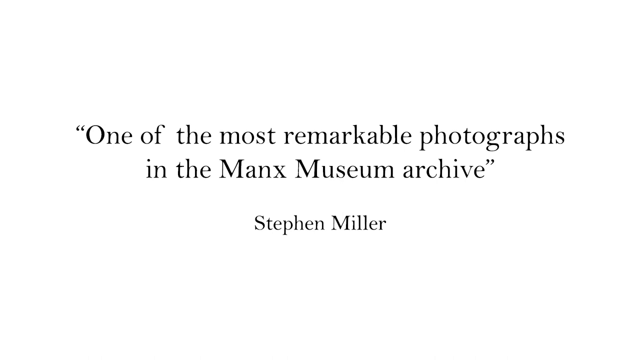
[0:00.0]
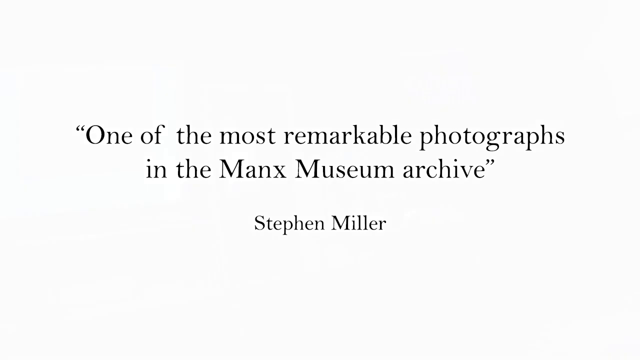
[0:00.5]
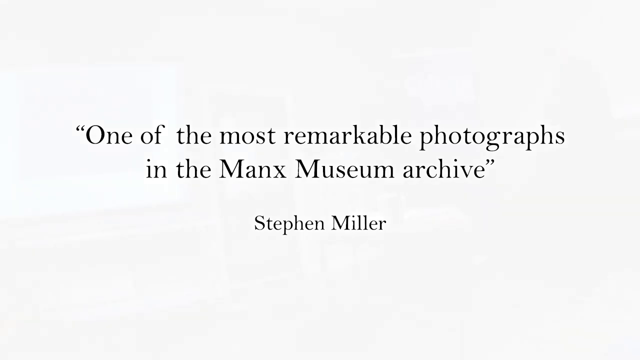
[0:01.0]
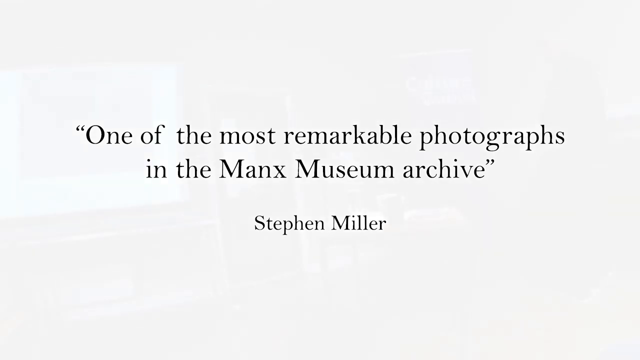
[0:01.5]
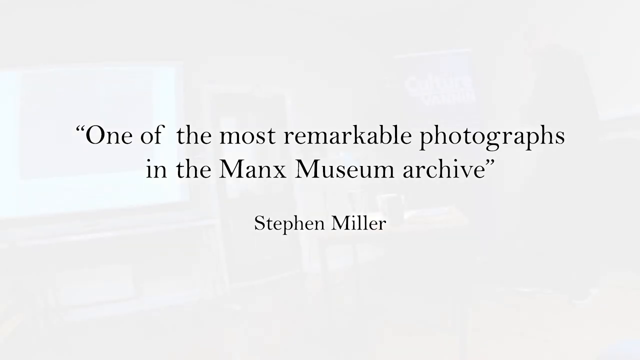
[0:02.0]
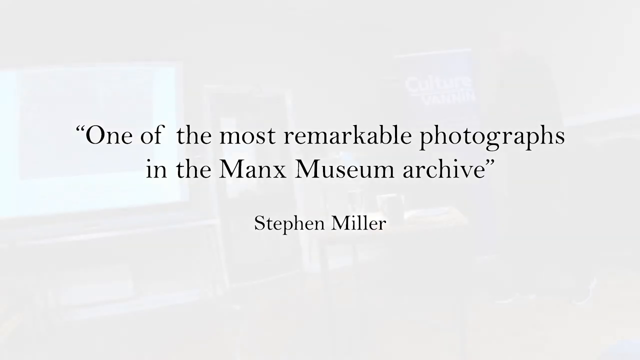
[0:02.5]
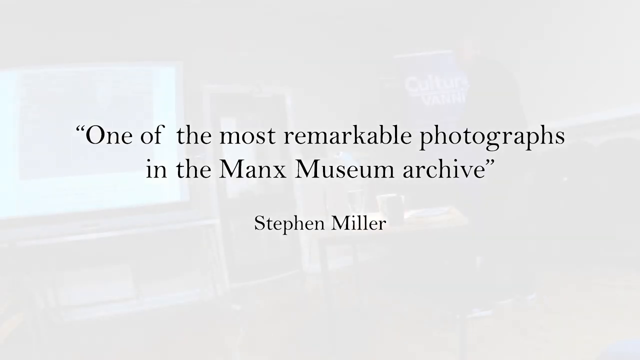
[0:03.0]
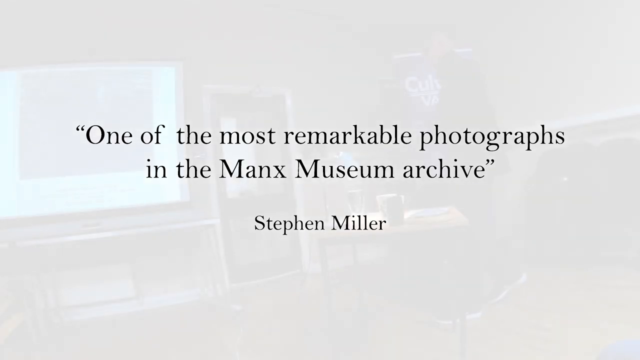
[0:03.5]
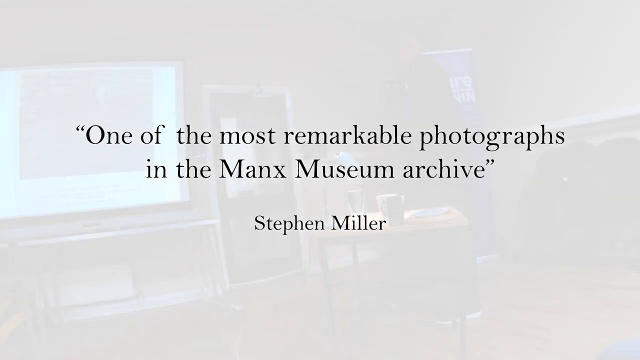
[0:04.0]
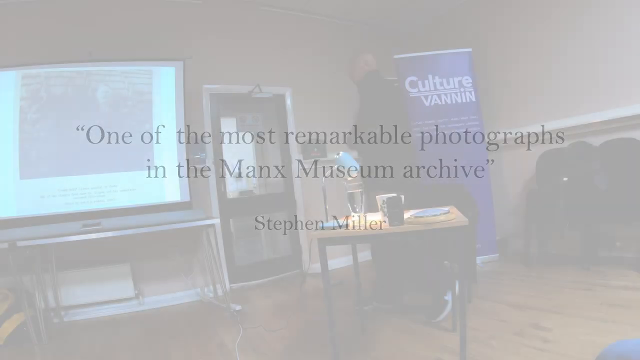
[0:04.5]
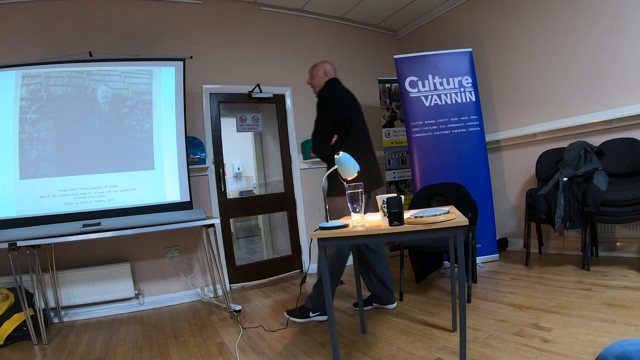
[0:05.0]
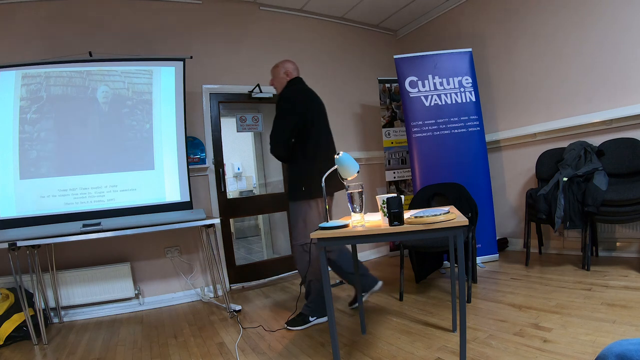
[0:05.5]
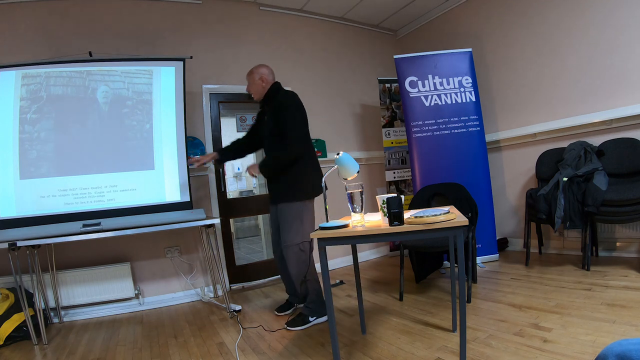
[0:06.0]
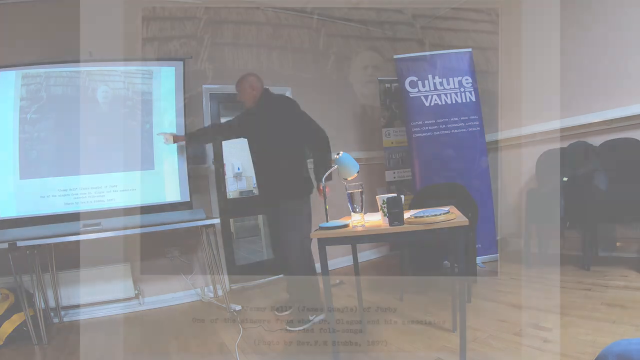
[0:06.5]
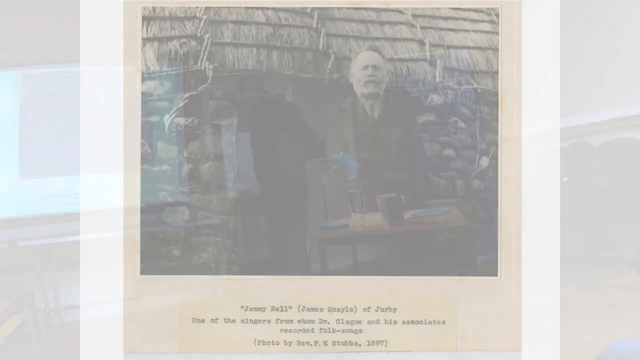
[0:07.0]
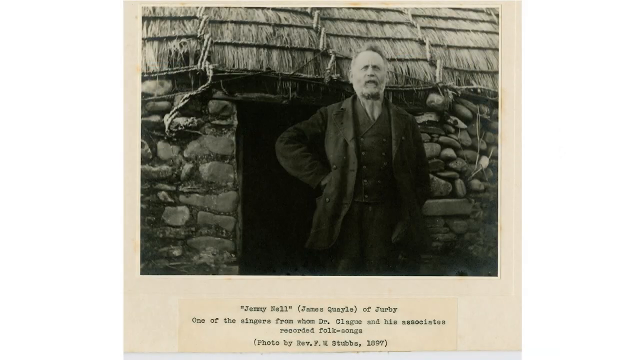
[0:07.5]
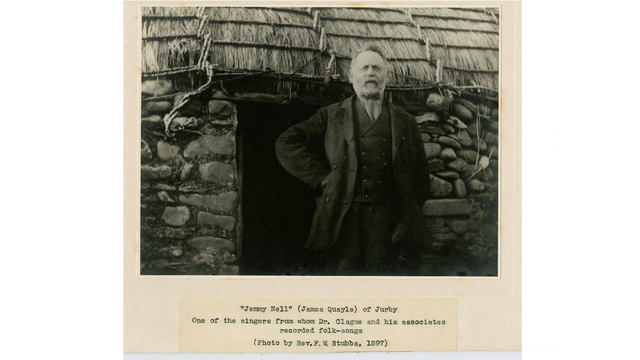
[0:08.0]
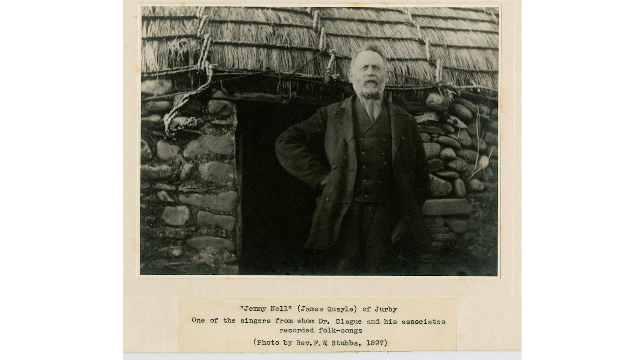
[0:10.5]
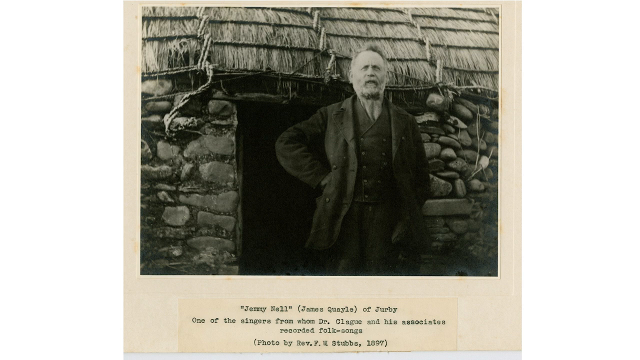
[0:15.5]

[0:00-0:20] The video opens on a white background with black text in the middle, a quote that reads "one of the most remarkable photographs in the Manx Museum Archive." Below it is a name, "Stephen Miller," also in black text. The video then transitions to what looks like a video clip of a man wearing what looks like a black sweater, gray pants and black sneakers. There is a desk in the middle and he is behind it; a lamp and a glass are in the middle of the desk. The man walks to the left, where there is a projector screen, reaches out with his right hand and points at it. The video then transitions to what looks like a black and white picture of a man standing in front of a hut that looks like a stone hut with a straw roof. He is looking at the camera. He has a white beard and appears to be wearing a long coat. His right hand is on his right hip and his left hand is at his side, and he stares toward the camera and a little to the right. At the bottom is black text that reads "Jeremy Bell" followed by something that is hard to read. The video stays on this photograph with the black text at the bottom.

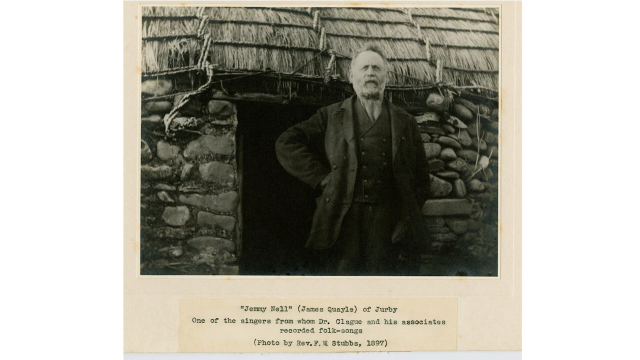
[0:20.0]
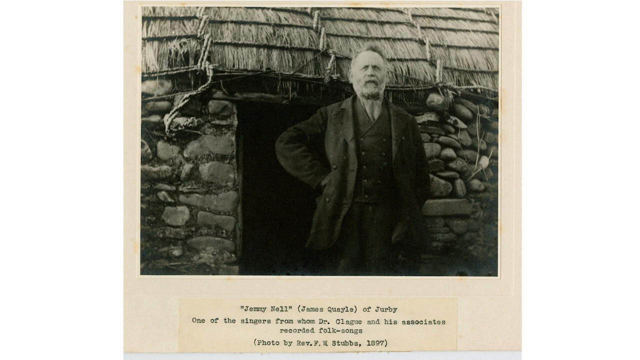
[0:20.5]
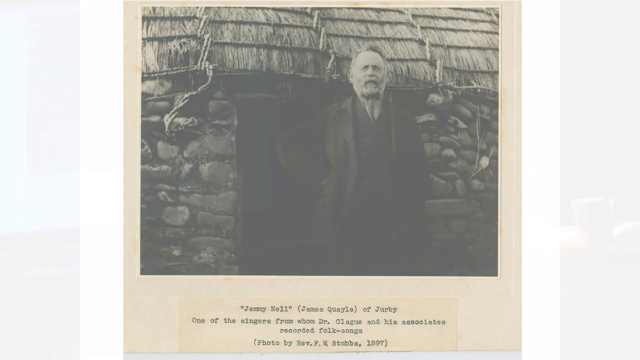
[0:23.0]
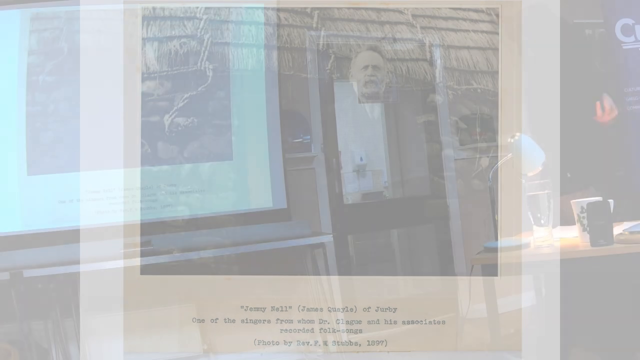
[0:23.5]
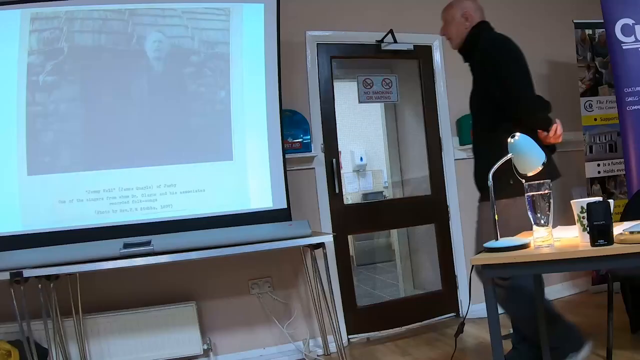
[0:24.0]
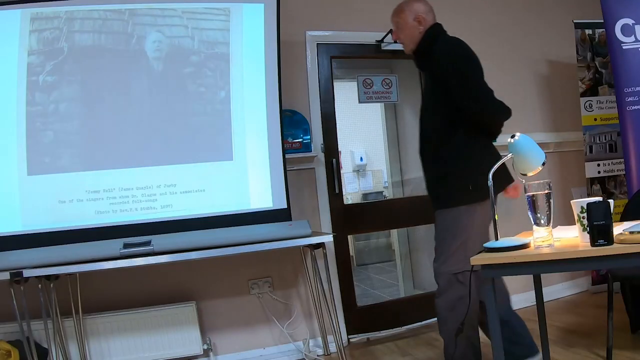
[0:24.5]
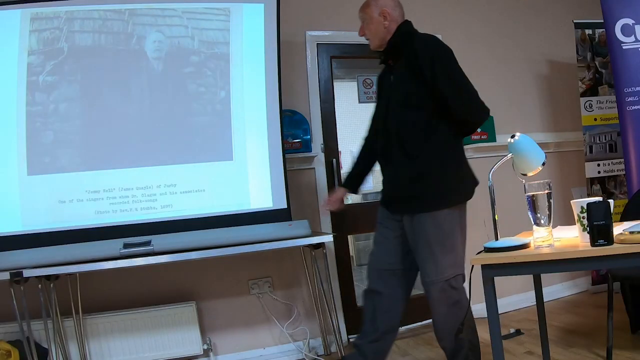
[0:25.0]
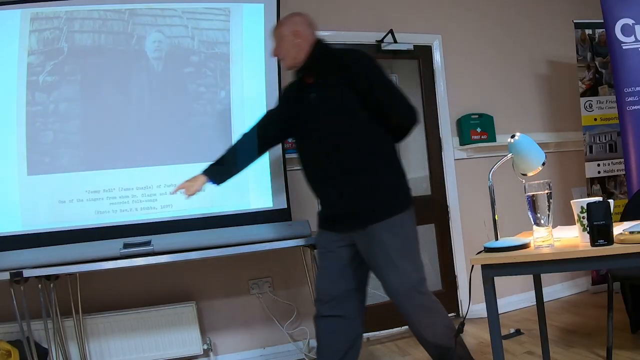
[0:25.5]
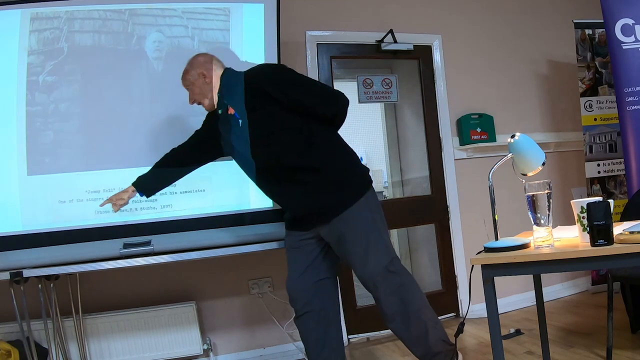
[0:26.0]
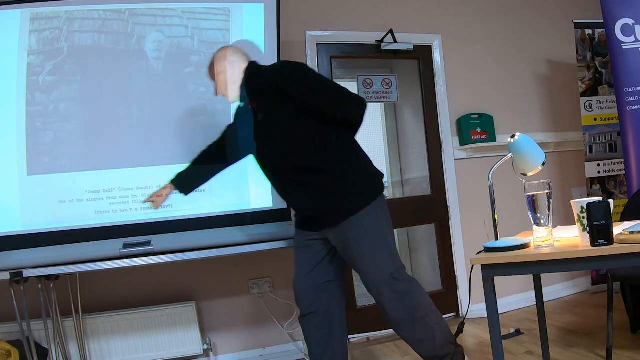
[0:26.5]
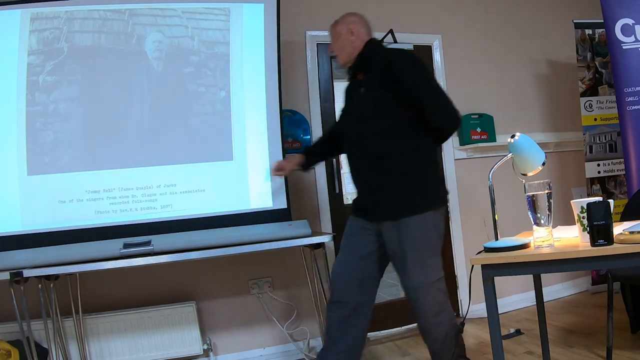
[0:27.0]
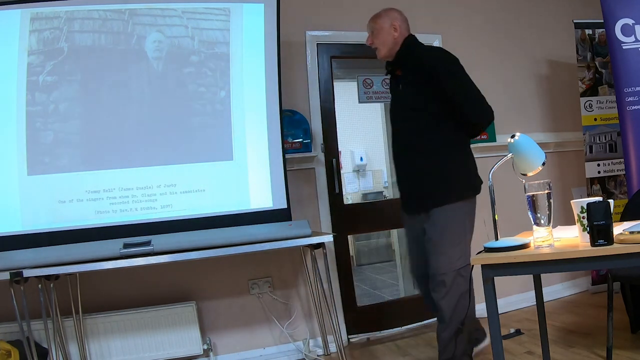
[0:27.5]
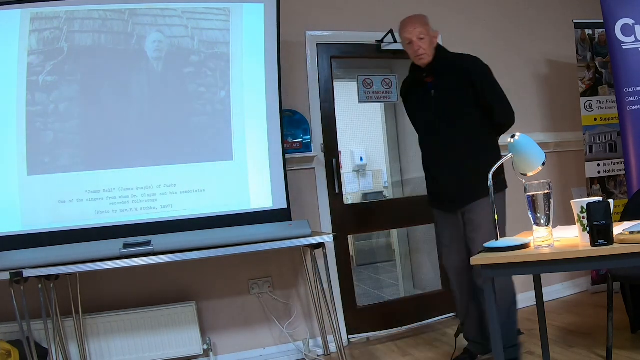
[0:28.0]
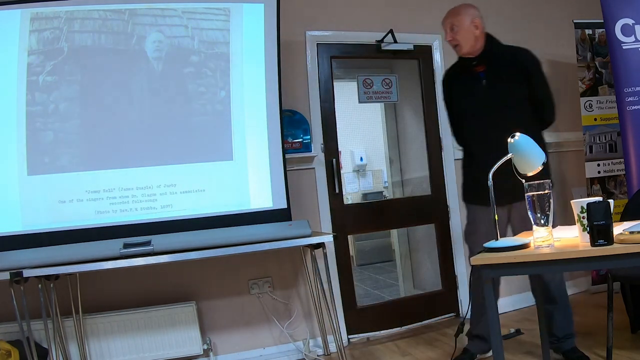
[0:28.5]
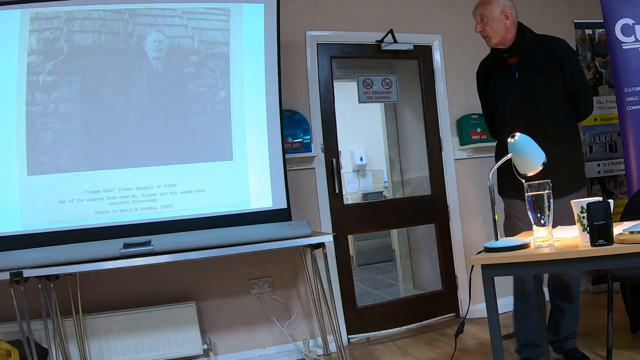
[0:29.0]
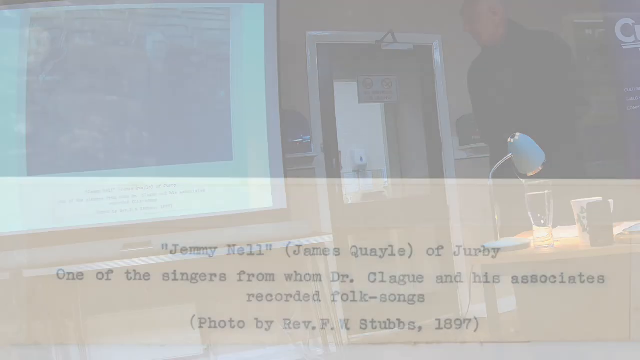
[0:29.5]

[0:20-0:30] A black and white photograph shows a man standing in front of the doorway of what looks like a stone hut. The hut has stone walls, and at the top of the photograph there appears to be a roof that looks like straw. The man looks old, perhaps in his seventies or eighties, with white hair, a beard and a mustache. His right hand is on his hip, and he is wearing what looks like a heavy coat with a vest underneath. Beneath the photograph is black text. The video stays on the photograph, then fades out to what looks like a man in a black sweater in a room. He walks over to the left, where there is a projector screen. He wears a black sweater and gray pants, looks like an older man, perhaps in his sixties or seventies, and is bald. The projector is showing the same photograph, and he points his right index finger down at the bottom of it, where the text is. He then walks back to the right with his hand behind his back, talking. Next comes a zoomed-in view of the text at the bottom of the photograph, which reads "Jemmy Nell, James Quayle of Derby, one of the singers from whom Dr. Clegg and his associates recorded folk songs, photo by Reverend F. W. Stubbs, 1897."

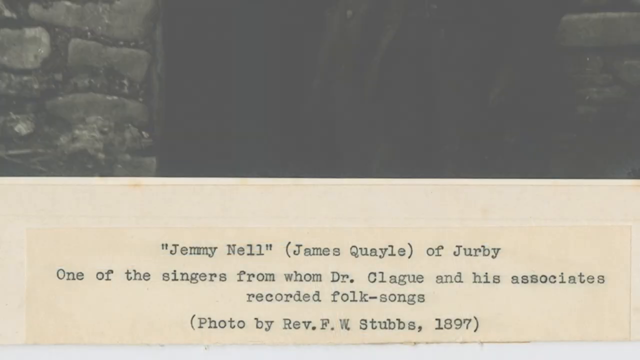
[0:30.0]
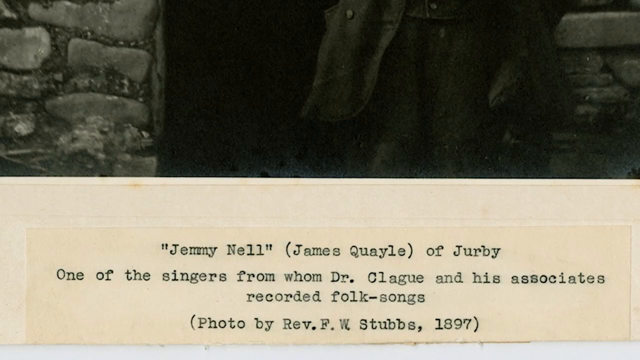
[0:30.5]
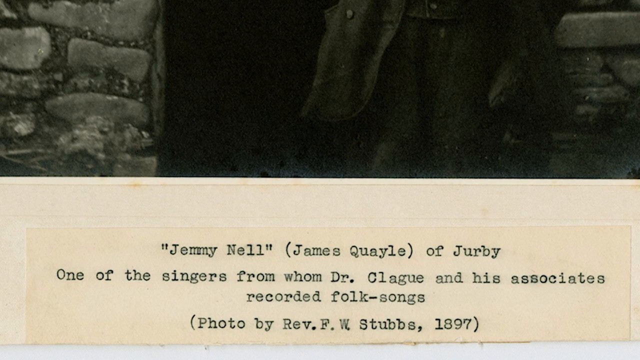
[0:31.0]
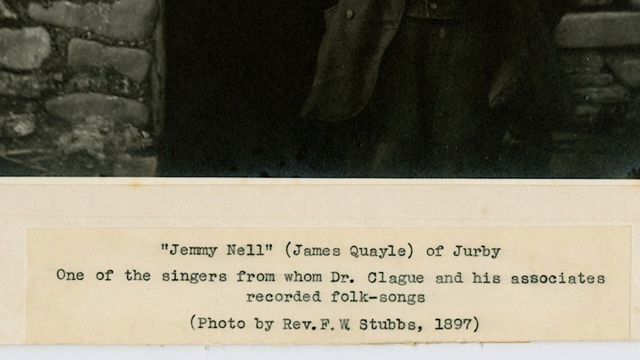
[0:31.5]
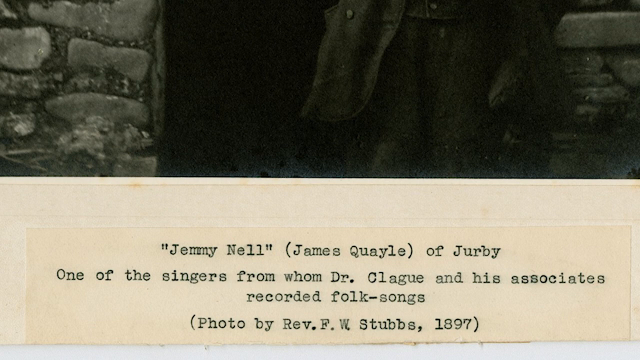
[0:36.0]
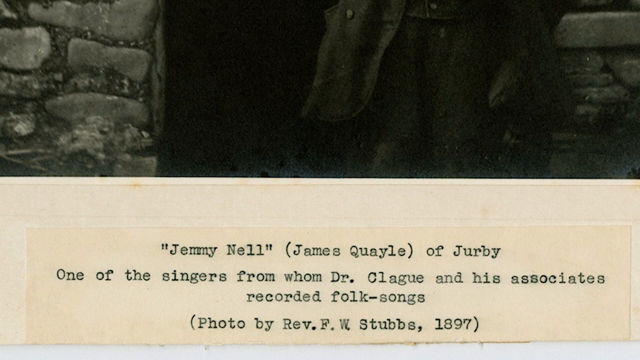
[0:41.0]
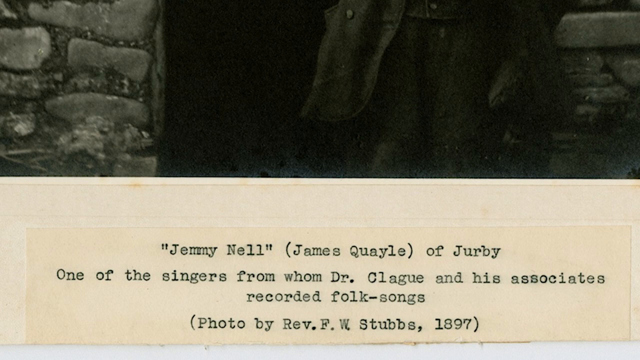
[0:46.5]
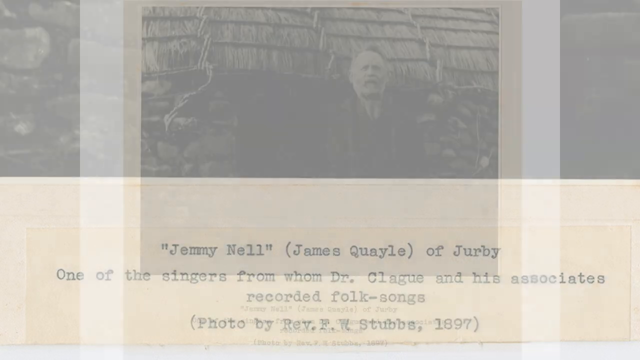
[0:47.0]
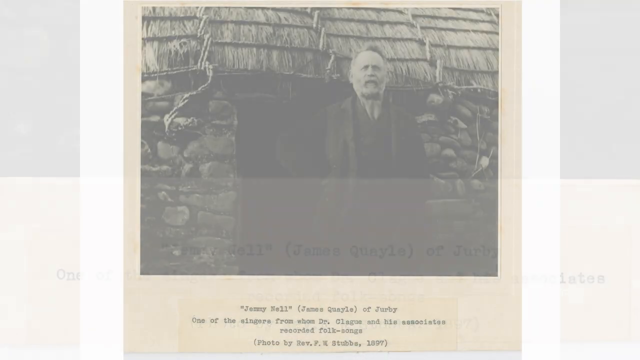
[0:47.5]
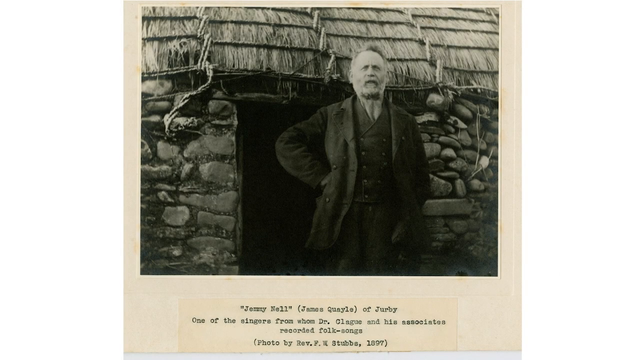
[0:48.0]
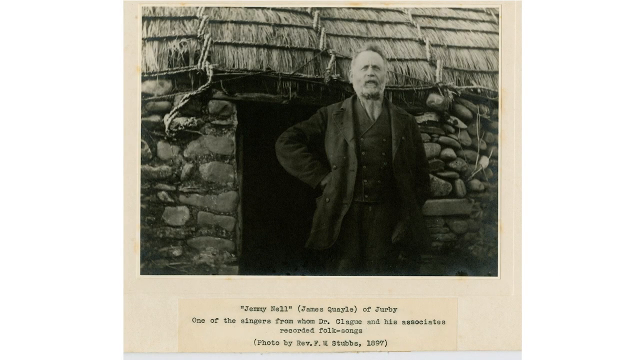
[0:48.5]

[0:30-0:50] A zoomed-in view shows what looks like the bottom of a photograph, too zoomed in to see much; only some brick walls are visible at the top left and top right. Below is black text reading "Jemmy Nell" in quotation marks, then "James Quayle" in parentheses, followed by "Of Jerby. One of the singers from whom Dr. Clegg, and his associates recorded folk songs. Photo by Reverend F.W. Stubbs, 1897." The view stays on this text for a couple more seconds, then transitions out to the zoomed-out version of the black and white photograph. A man is apparently standing in front of the doorway of a stone-walled hut, with the doorway behind him, stone walls on the left and right, and above him what looks like a straw hat or straw roof. He faces directly toward the camera, his right hand on his hip and his left hand apparently at his side. He wears a thick coat and a vest, looks like a white man in his 70s, has a beard and mustache, and appears to be looking at the camera and a little over it.